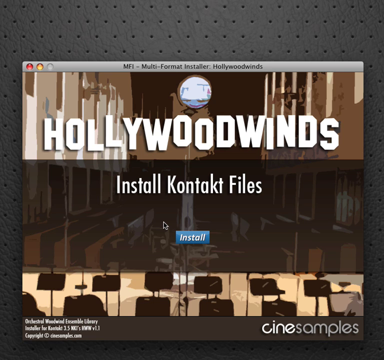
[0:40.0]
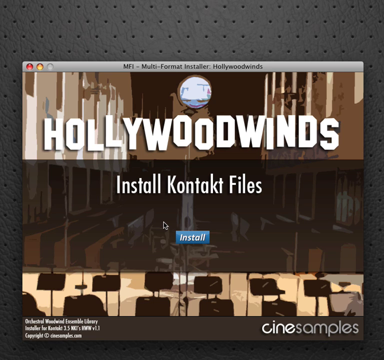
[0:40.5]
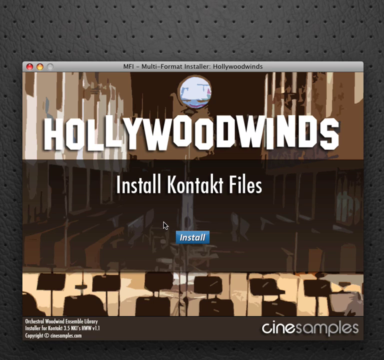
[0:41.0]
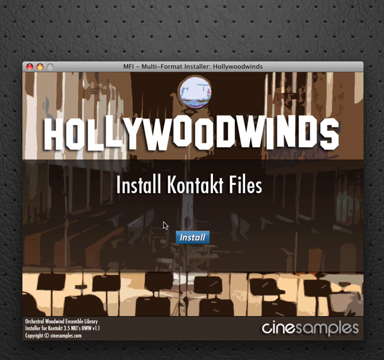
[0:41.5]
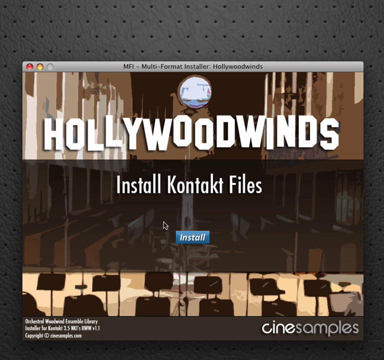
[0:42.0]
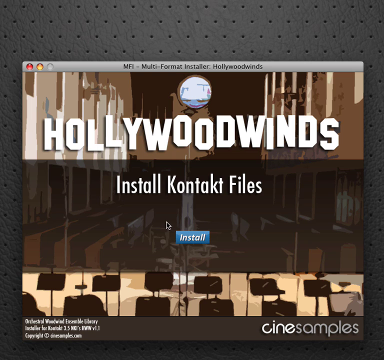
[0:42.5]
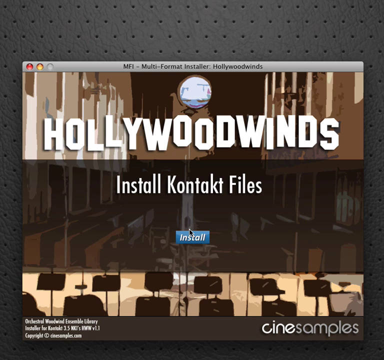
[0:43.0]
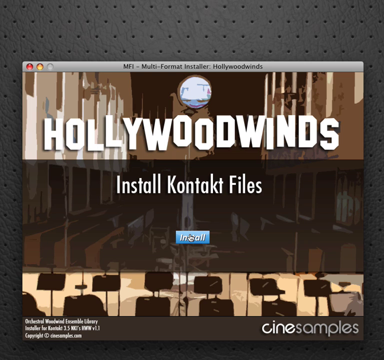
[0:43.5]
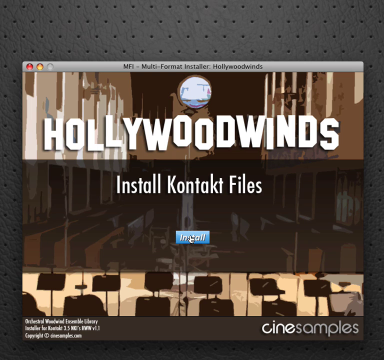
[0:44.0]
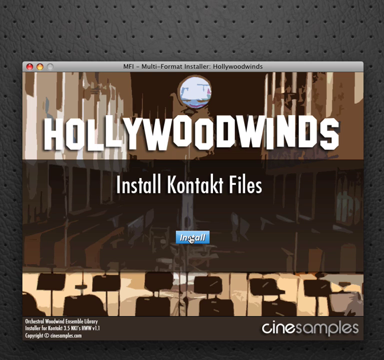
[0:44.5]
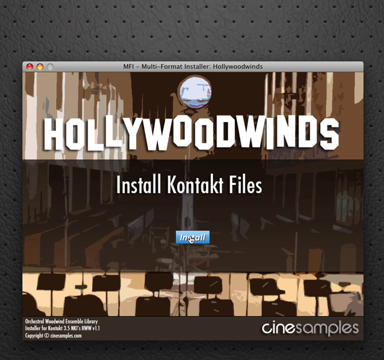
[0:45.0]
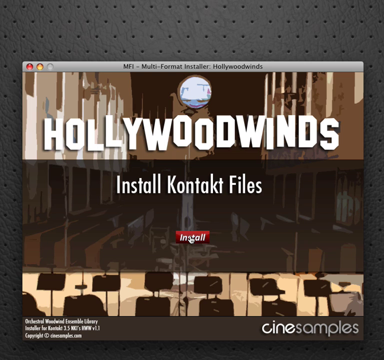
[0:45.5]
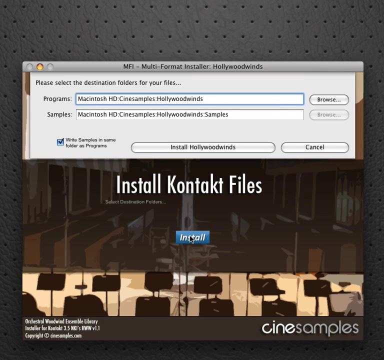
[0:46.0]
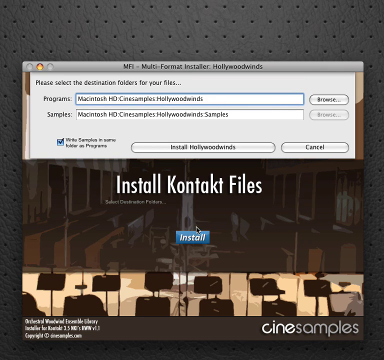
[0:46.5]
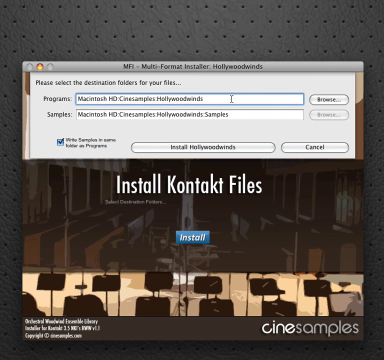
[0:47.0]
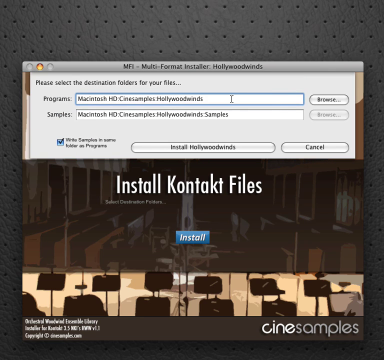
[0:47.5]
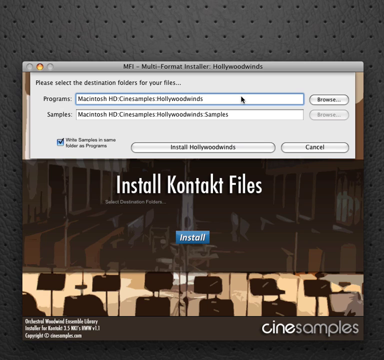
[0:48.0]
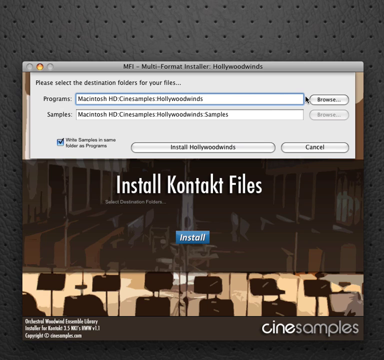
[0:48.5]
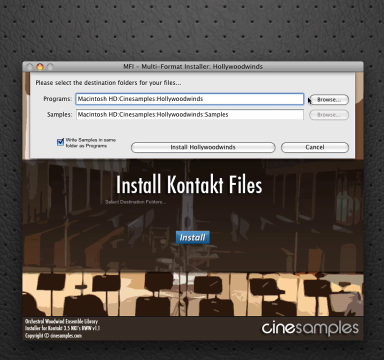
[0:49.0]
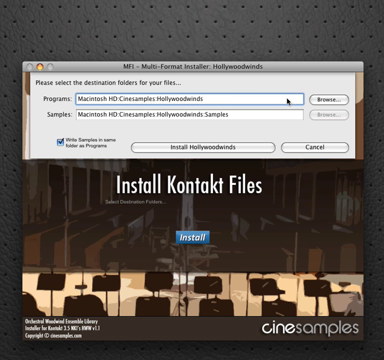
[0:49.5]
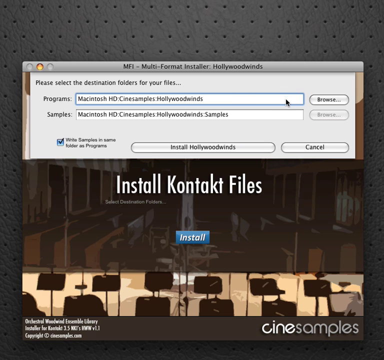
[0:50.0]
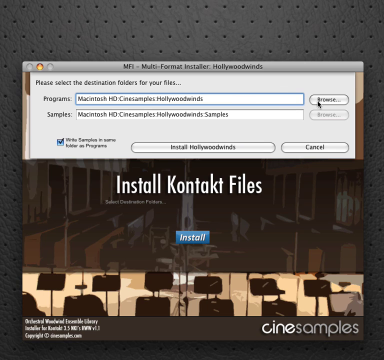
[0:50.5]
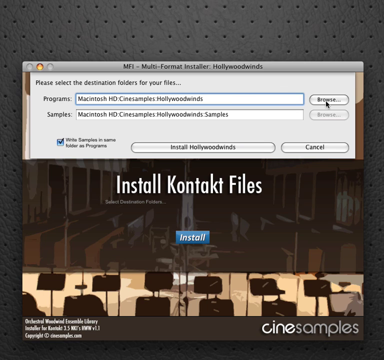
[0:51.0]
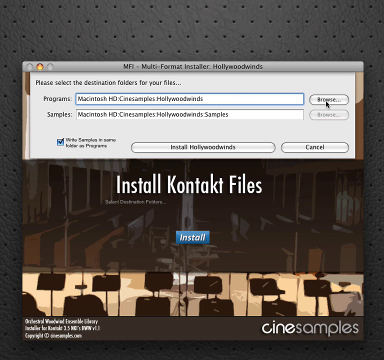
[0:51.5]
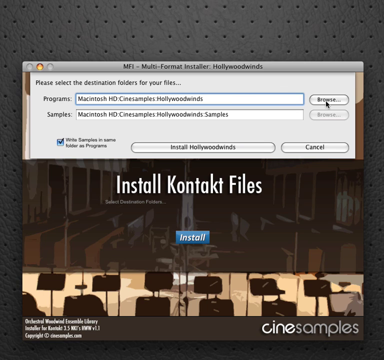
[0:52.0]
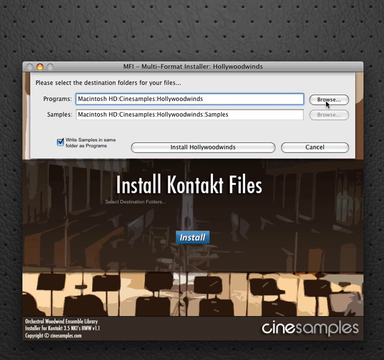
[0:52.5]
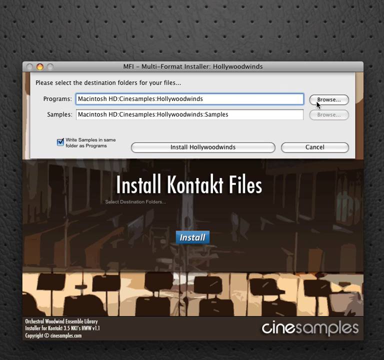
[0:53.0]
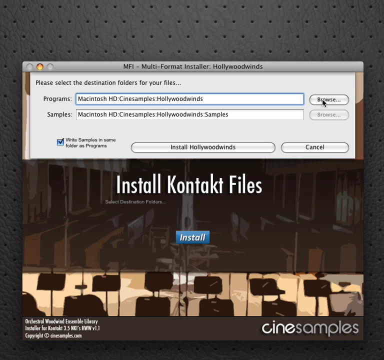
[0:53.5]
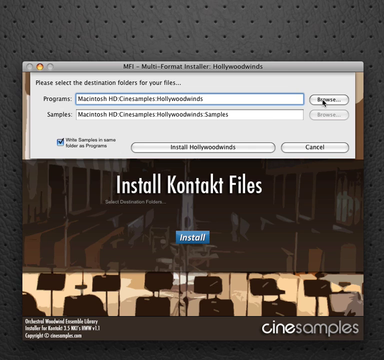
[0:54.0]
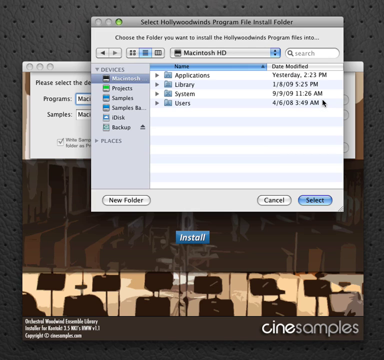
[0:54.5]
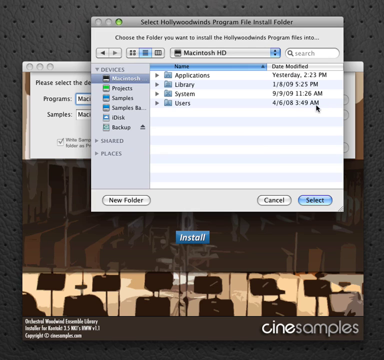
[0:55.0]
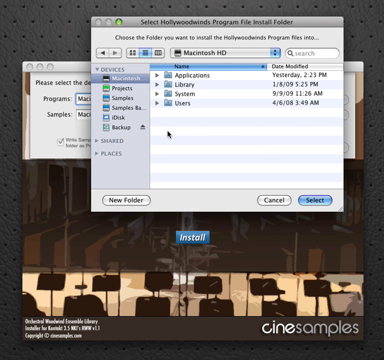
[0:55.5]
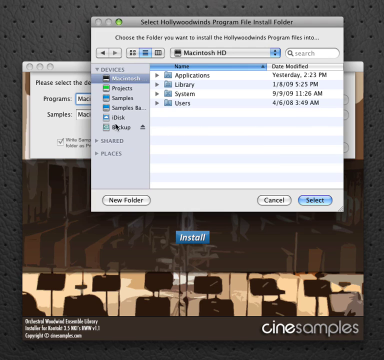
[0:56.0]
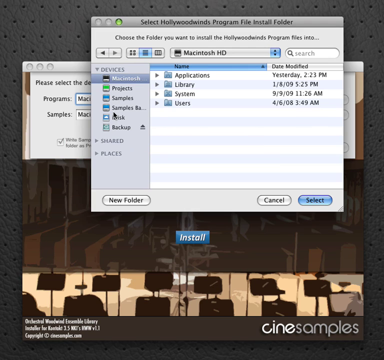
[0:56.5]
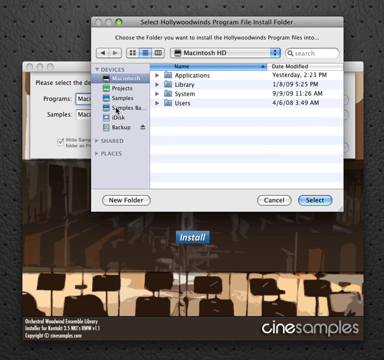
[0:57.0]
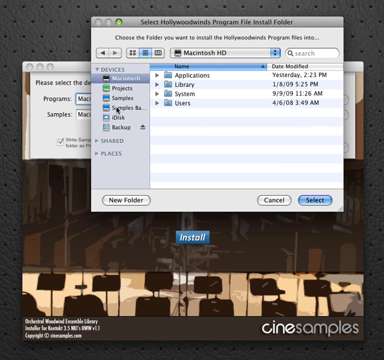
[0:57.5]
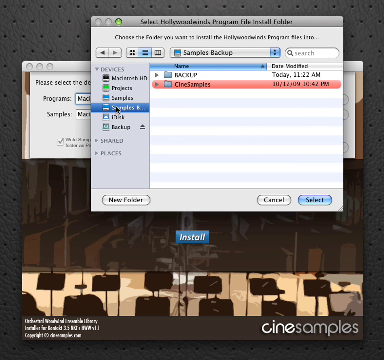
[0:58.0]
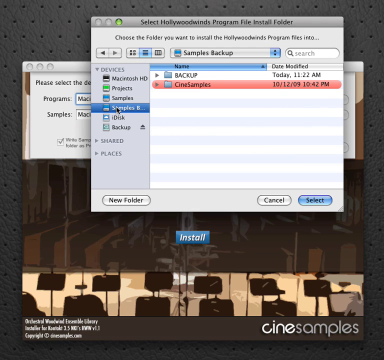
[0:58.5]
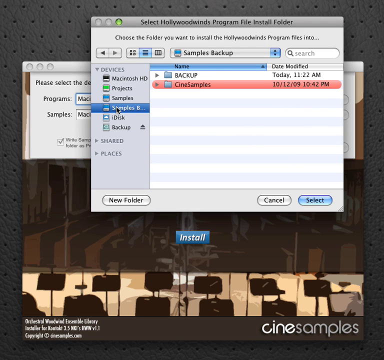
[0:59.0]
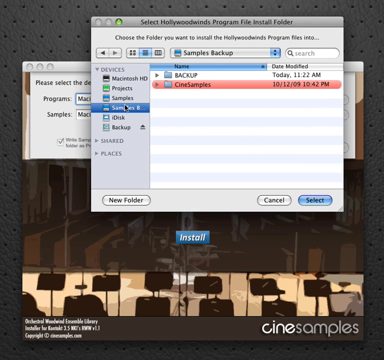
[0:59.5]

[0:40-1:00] The Hollywood Winds page is shown, and the cursor goes to install contact files, then moves over install and presses it. A multi-format installer comes up, showing two programs: Macintosh HD, case samples, Hollywood Winds, and Macintosh HD samples, Hollywood Wins samples. The cursor goes over the browse button and clicks it. At the top of the pop-up box it reads "select hollywood winds program file install folder," and a variety of folders and devices appear. The devices listed are Macintosh, projects, samples, samples b, idisk and backup, and the names to the left of the devices are applications, library, system and users. The cursor moves over samples, which brings up a backup file and a cine sample file, and the cursor clicks. Nothing else happens after that.